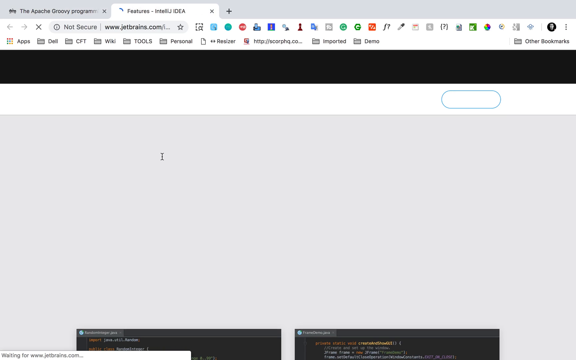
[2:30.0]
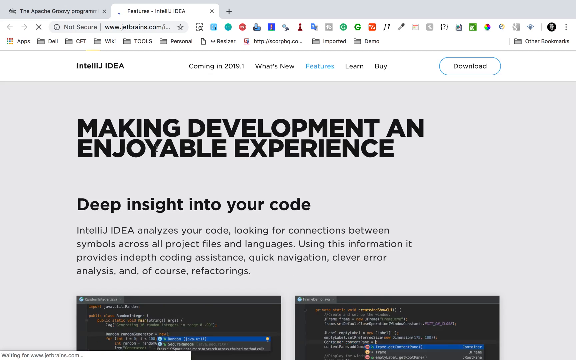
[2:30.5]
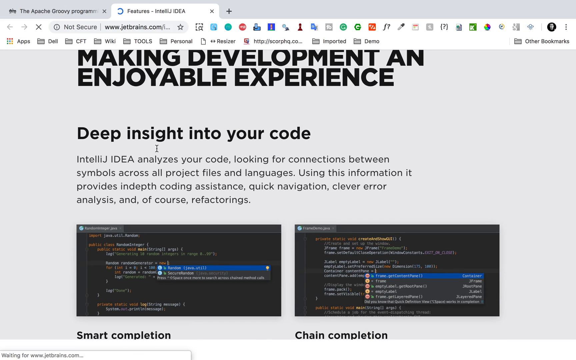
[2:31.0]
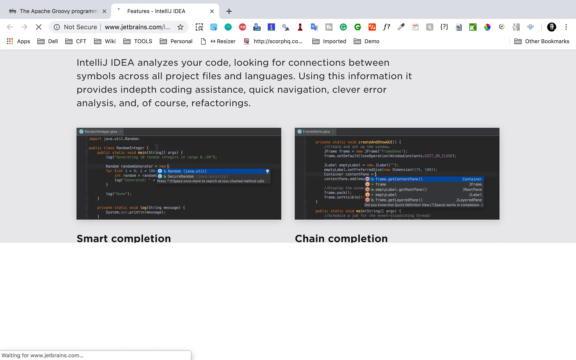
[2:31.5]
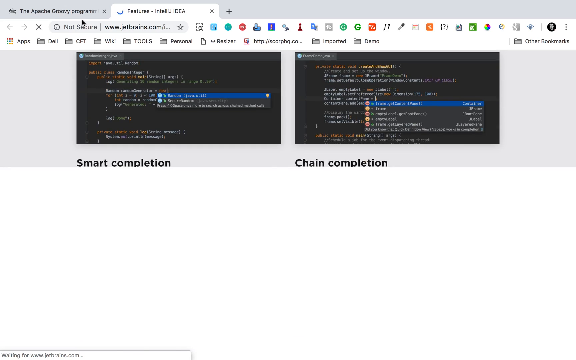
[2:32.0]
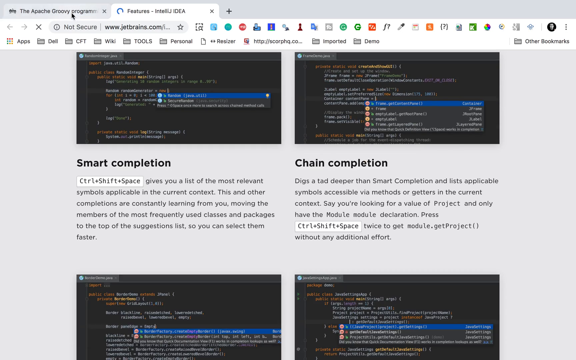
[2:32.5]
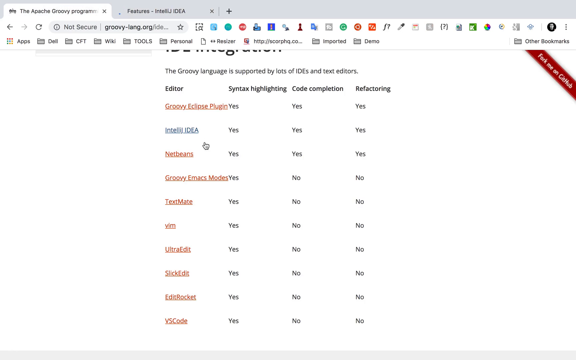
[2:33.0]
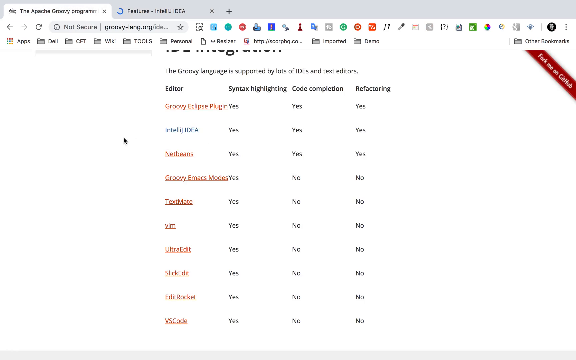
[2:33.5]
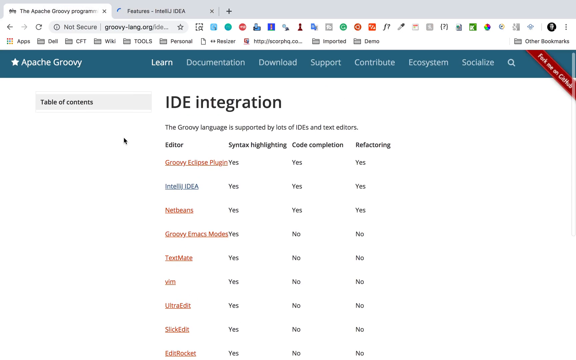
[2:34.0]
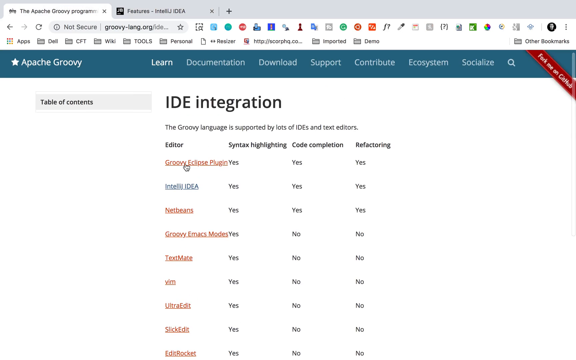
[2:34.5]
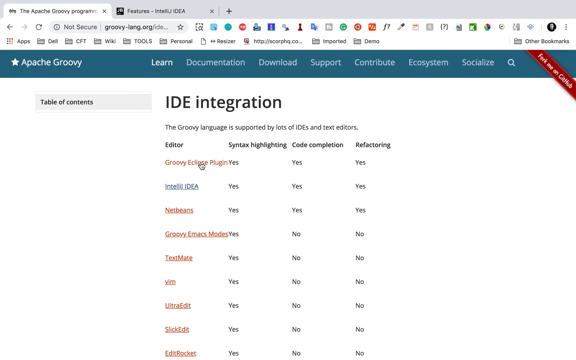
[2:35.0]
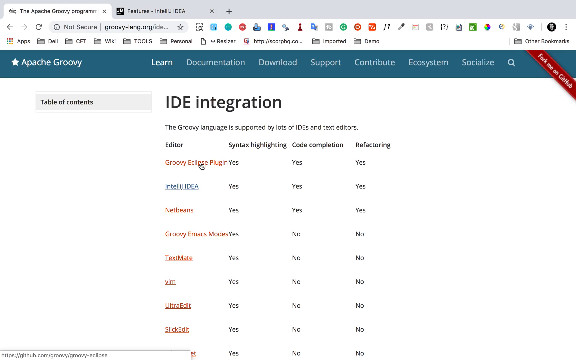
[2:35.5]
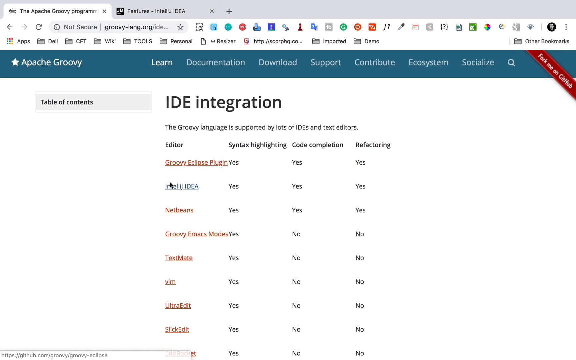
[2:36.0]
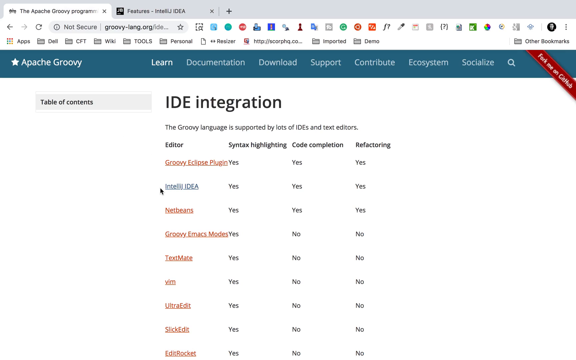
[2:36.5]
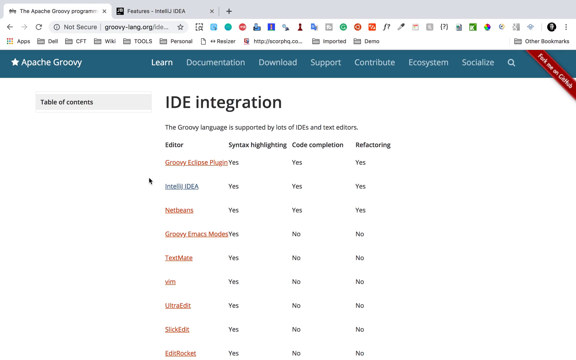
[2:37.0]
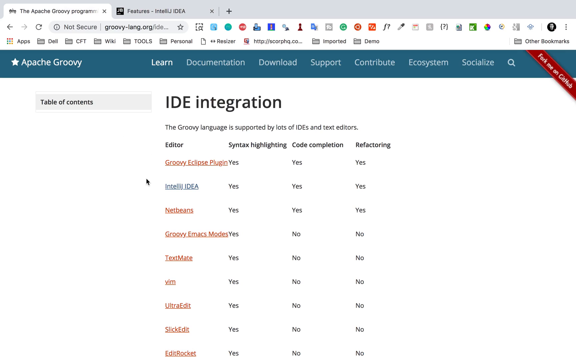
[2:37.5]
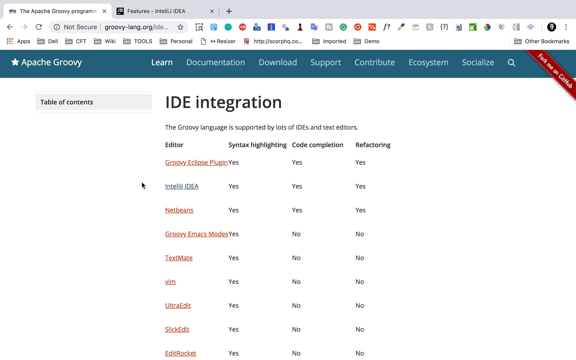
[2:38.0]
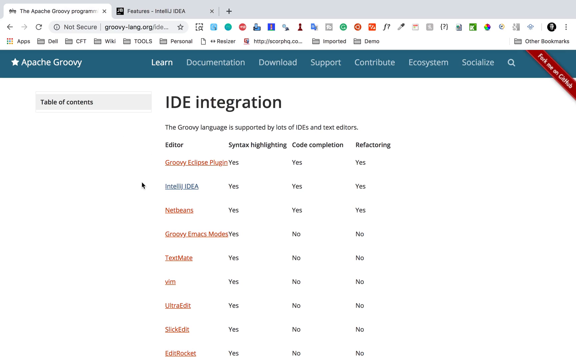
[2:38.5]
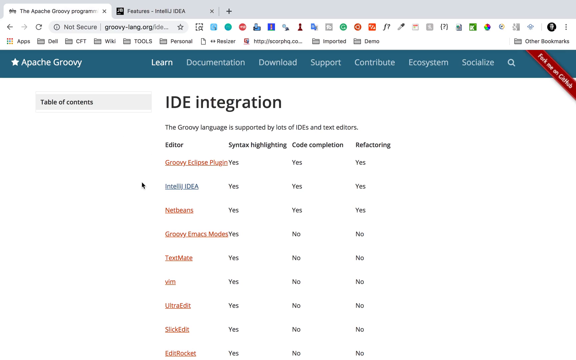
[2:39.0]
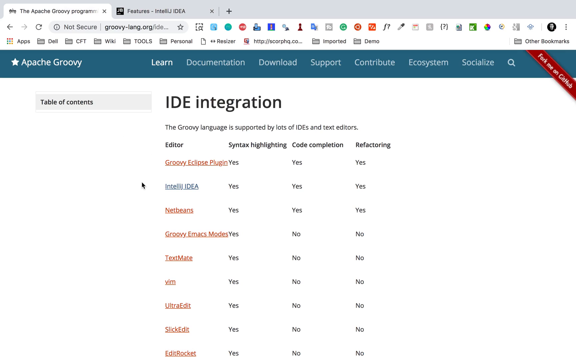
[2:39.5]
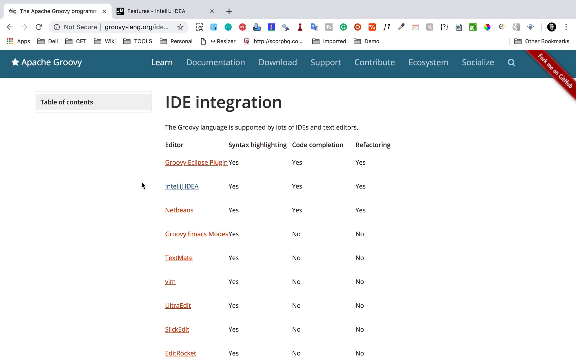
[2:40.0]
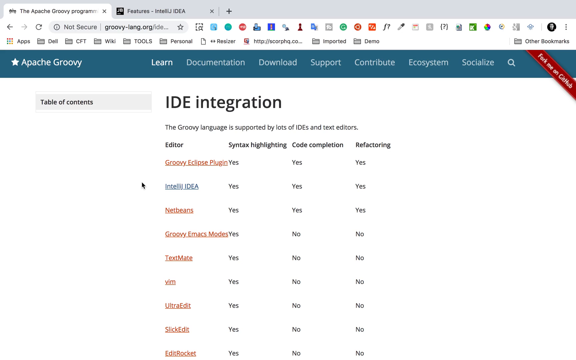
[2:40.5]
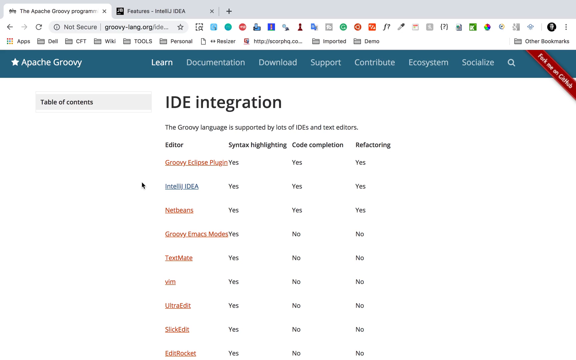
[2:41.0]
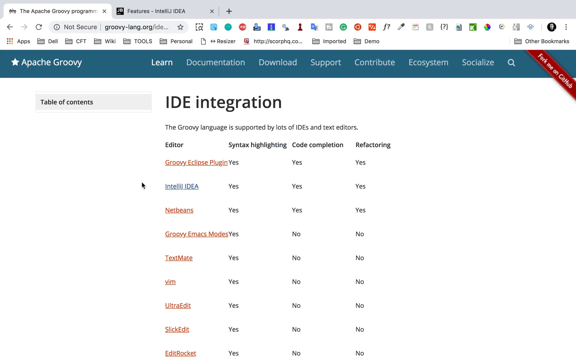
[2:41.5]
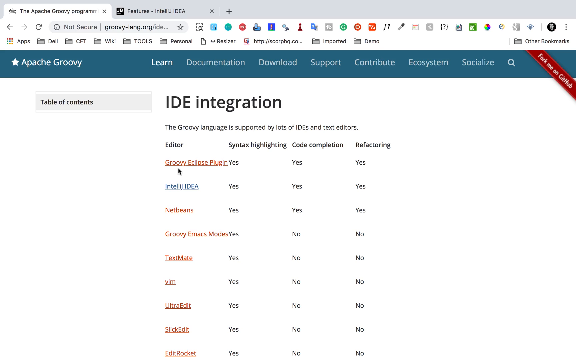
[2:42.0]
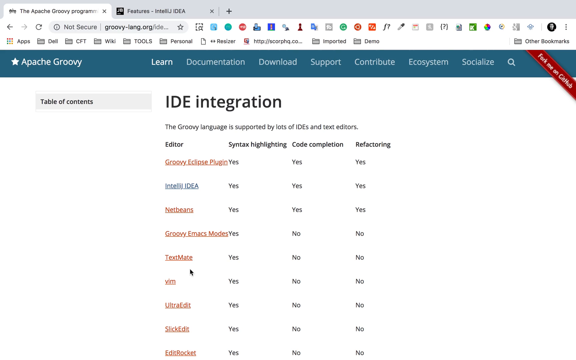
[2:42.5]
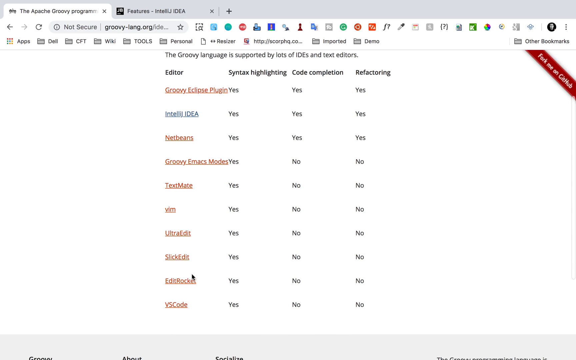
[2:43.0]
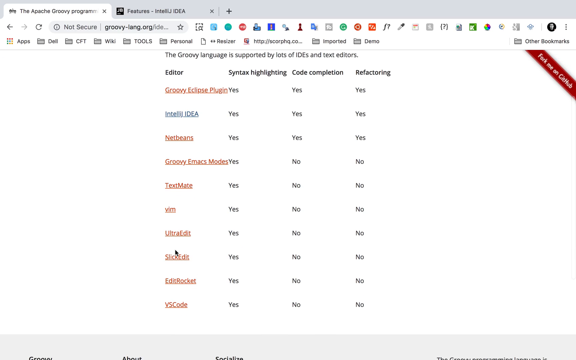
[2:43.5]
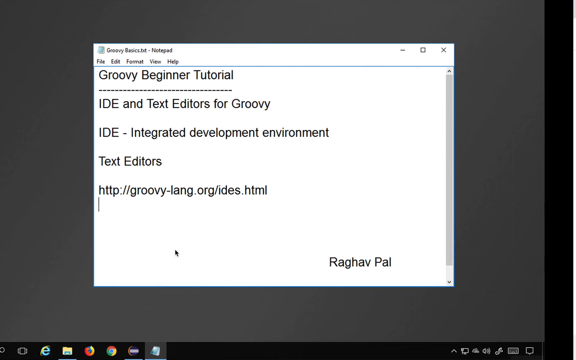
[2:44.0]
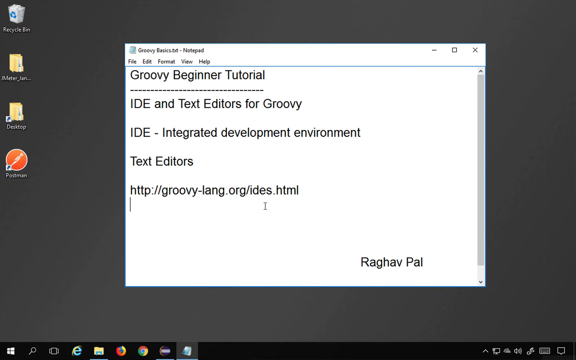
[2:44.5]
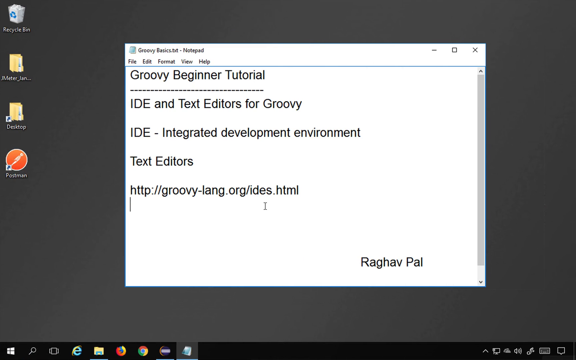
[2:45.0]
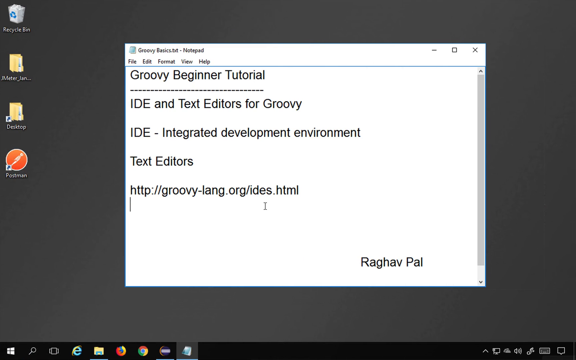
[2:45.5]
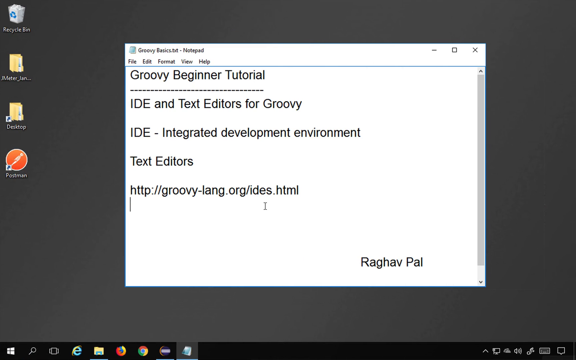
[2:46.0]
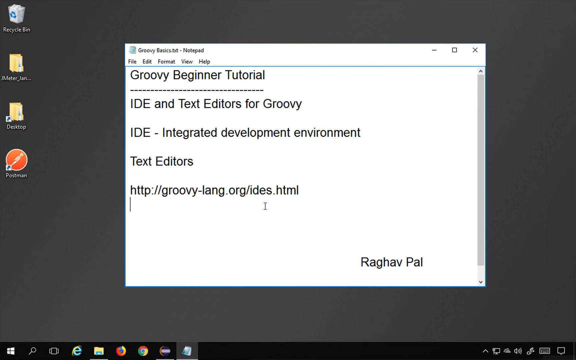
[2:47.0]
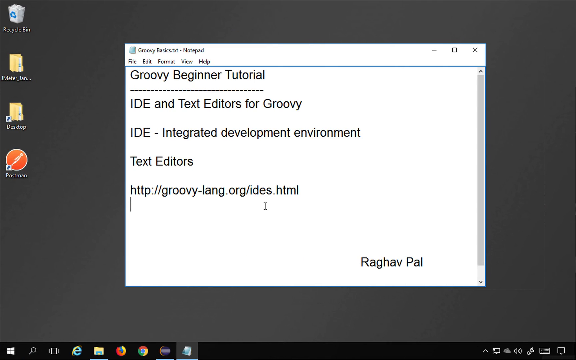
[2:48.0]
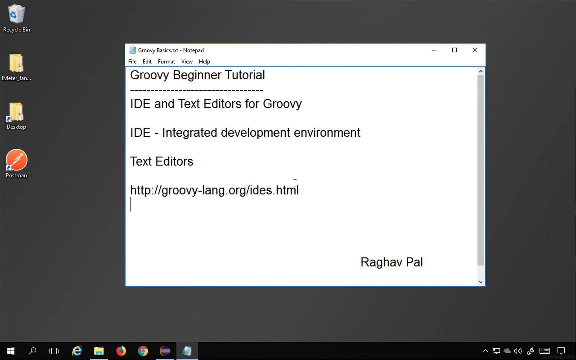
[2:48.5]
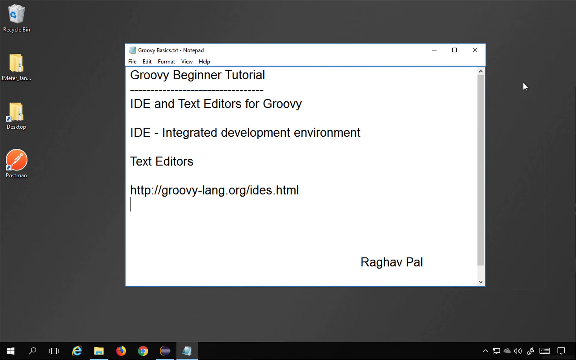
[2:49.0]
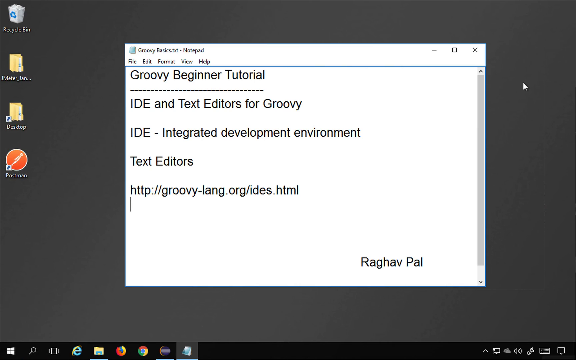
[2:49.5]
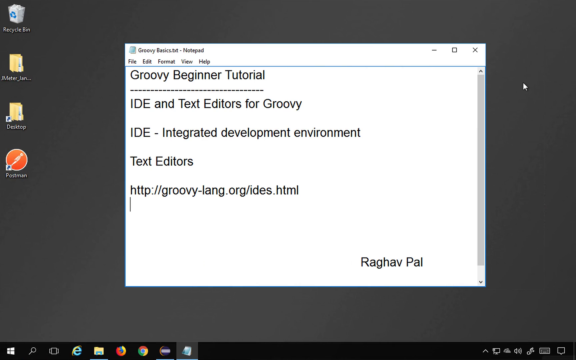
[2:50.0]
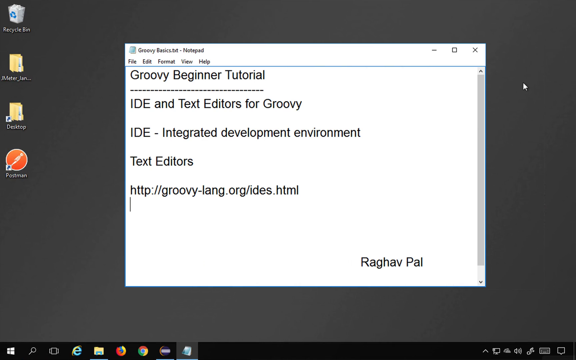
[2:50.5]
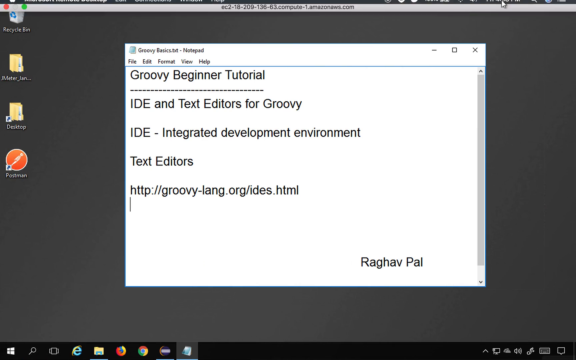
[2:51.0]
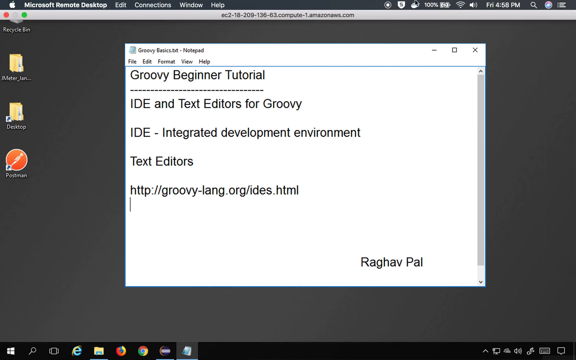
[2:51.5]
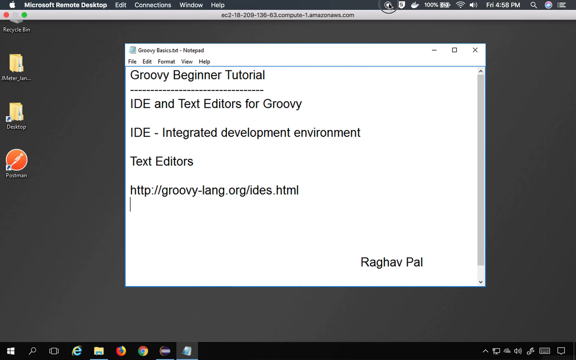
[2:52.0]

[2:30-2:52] The Apache Groovy web page is shown at its Table of Contents for IDE integration, with text below reading "the Groovy language is supported by lots of IDEs and text editors". Eight editors are visible, along with whether they are capable of syntax highlighting, code completion and/or refactoring. Tabs for Learn, Documentation, Download, Support, Contribute, Ecosystem and Socialize are in a blue bar above the table of contents. The cursor moves over many of the editors without clicking, and the page scrolls upward and back to the top. The cursor sort of hovers over the Groovy clips plug-in, moves down to Intelli-Idea, then over VS Code, as the person scrolls up and down the page. Finally the person clicks on Intelli-Idea, which brings up a new page.